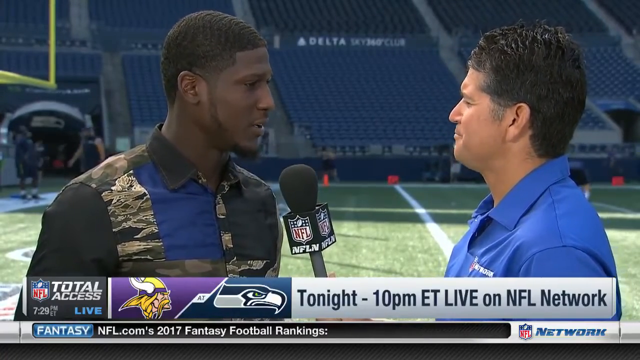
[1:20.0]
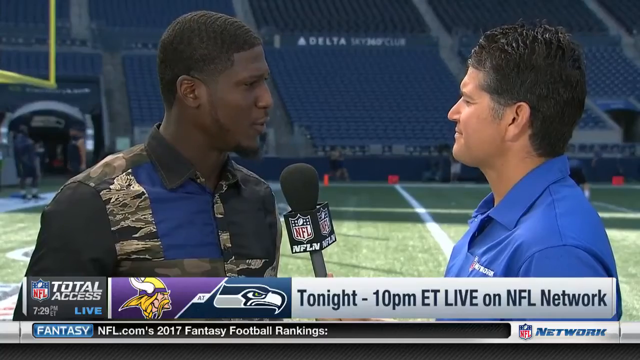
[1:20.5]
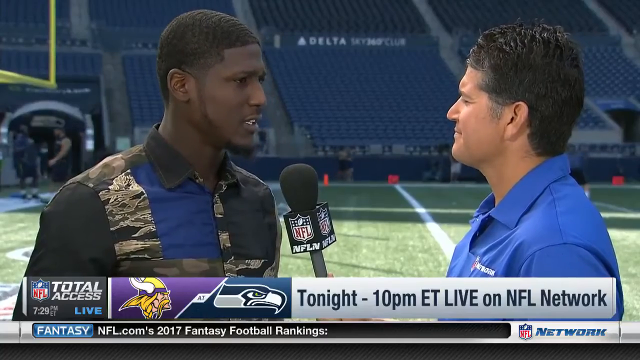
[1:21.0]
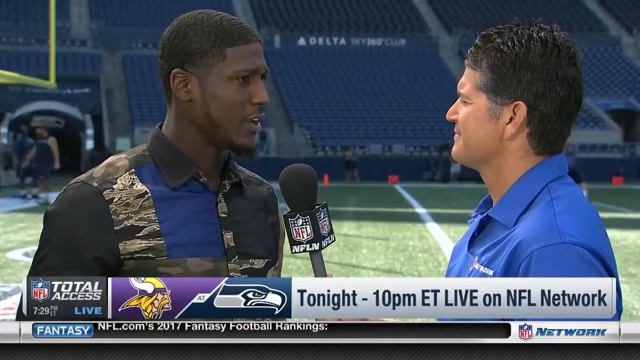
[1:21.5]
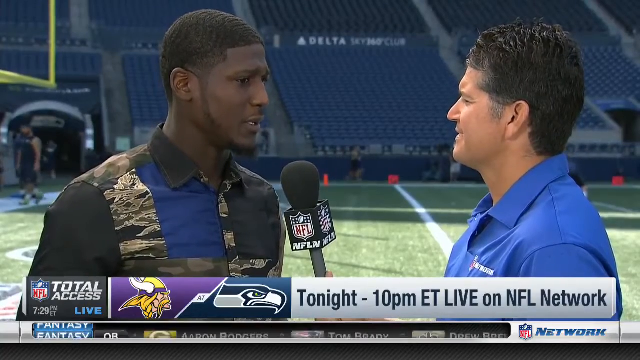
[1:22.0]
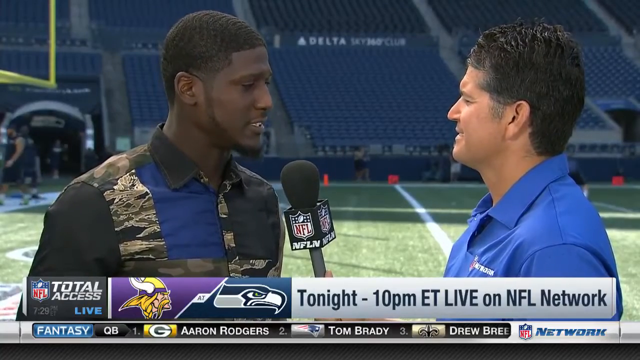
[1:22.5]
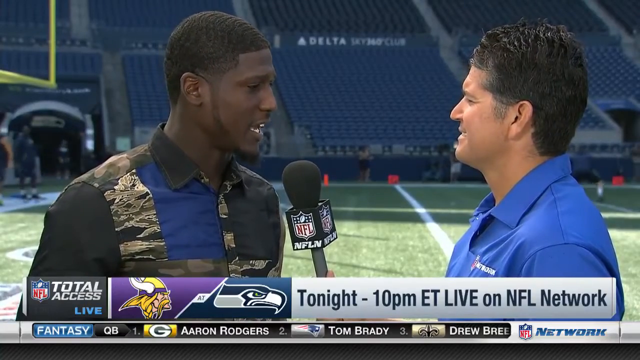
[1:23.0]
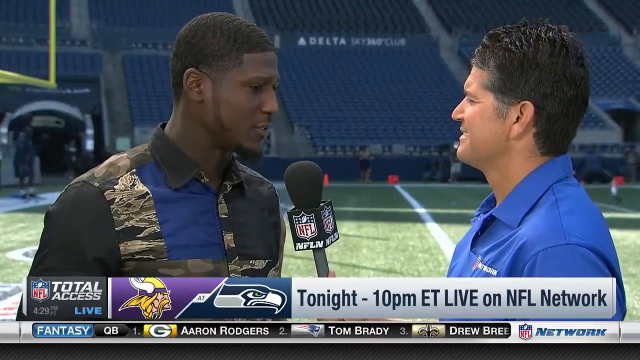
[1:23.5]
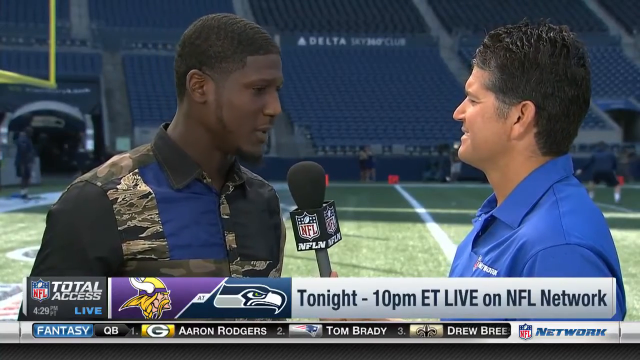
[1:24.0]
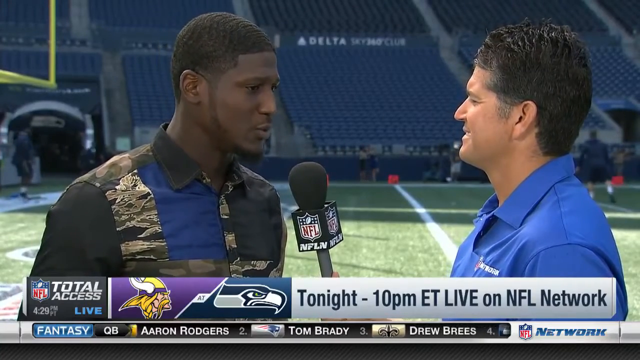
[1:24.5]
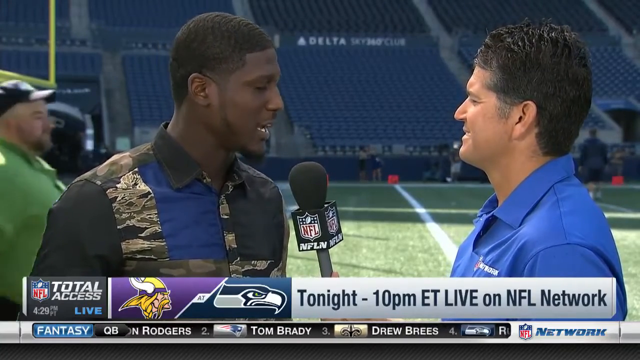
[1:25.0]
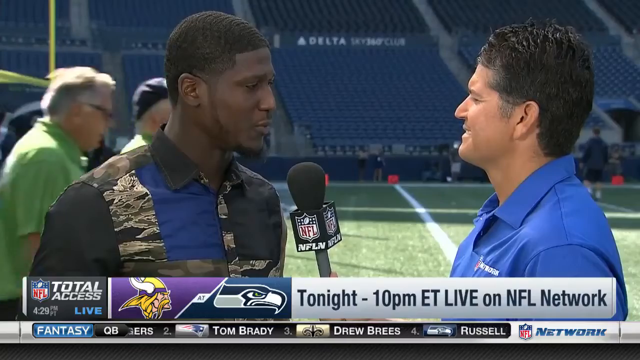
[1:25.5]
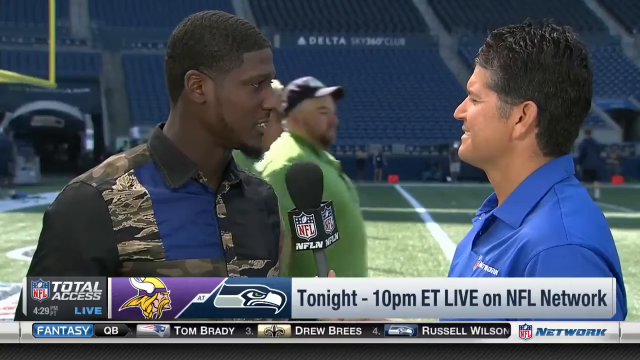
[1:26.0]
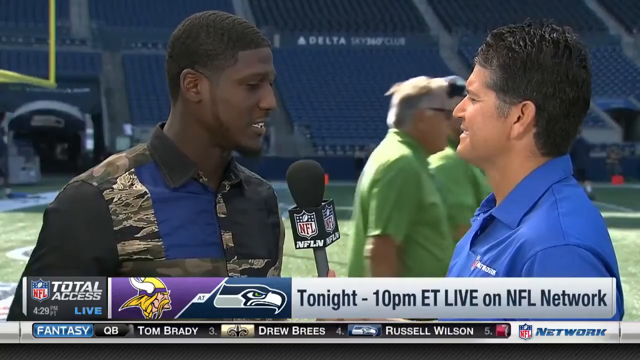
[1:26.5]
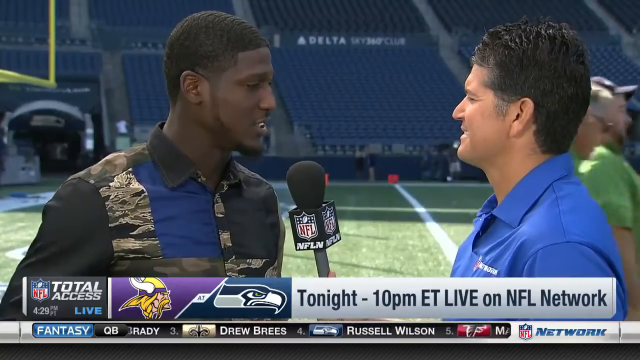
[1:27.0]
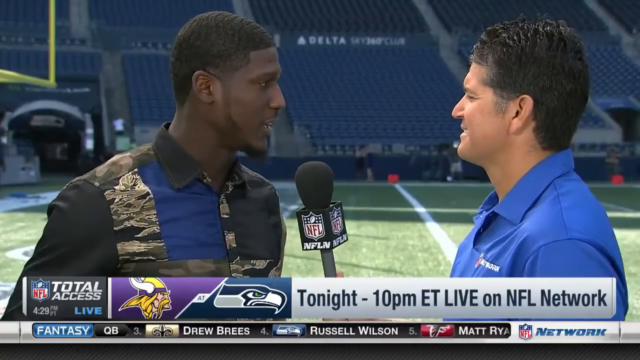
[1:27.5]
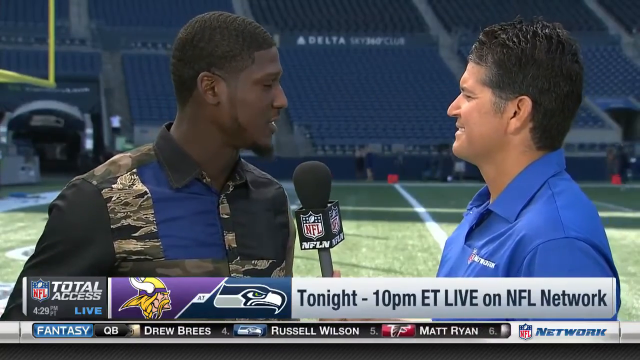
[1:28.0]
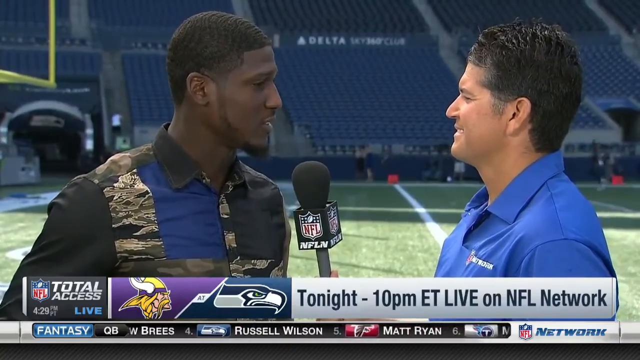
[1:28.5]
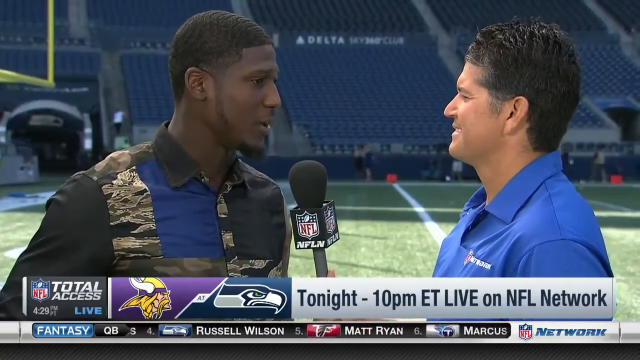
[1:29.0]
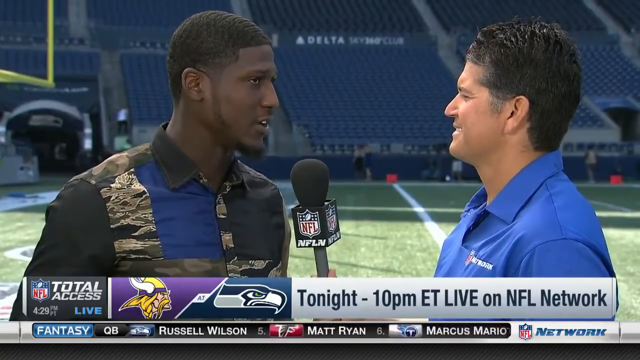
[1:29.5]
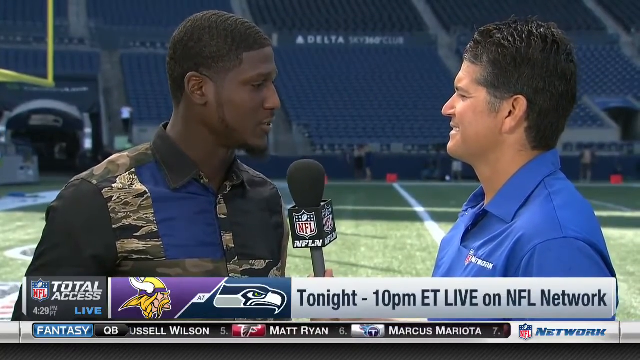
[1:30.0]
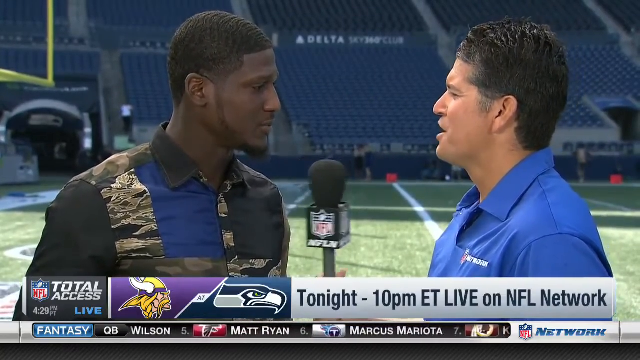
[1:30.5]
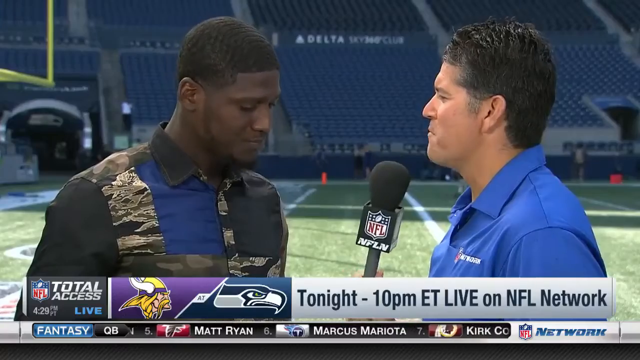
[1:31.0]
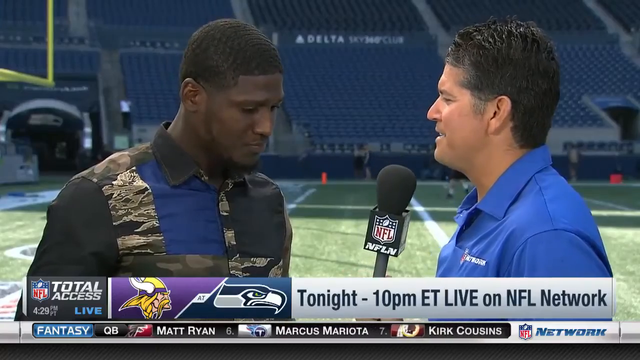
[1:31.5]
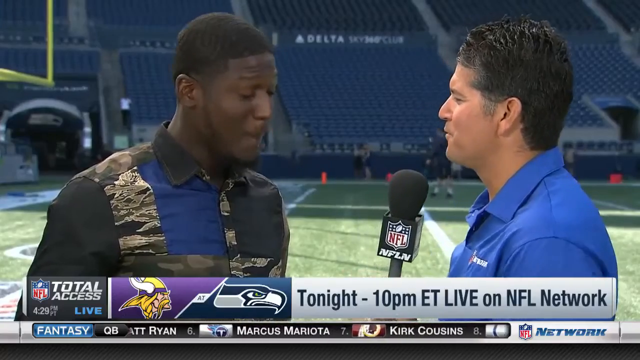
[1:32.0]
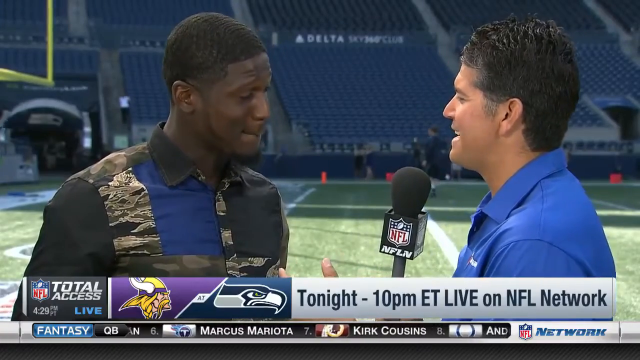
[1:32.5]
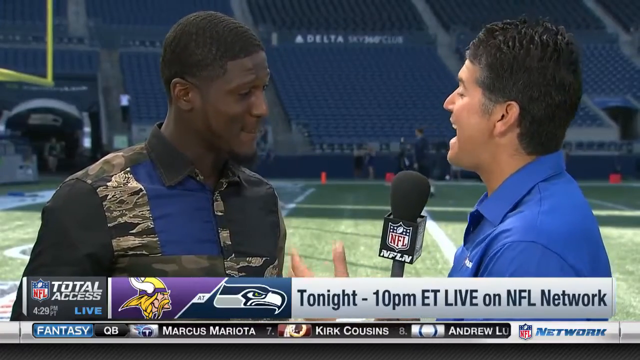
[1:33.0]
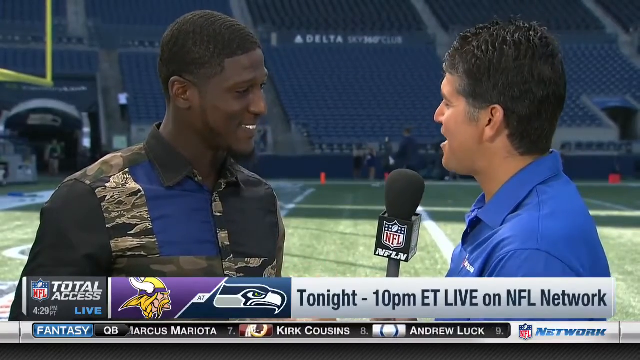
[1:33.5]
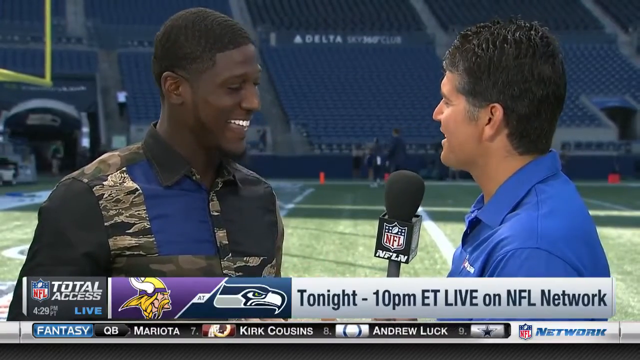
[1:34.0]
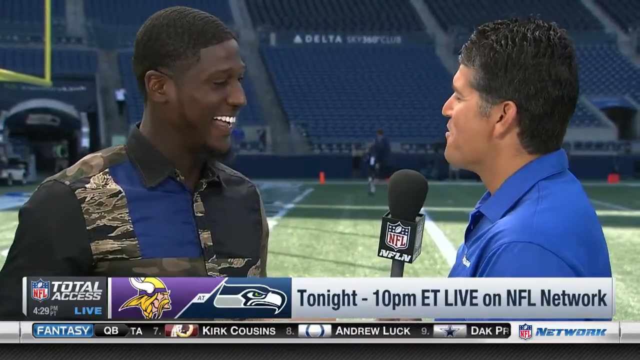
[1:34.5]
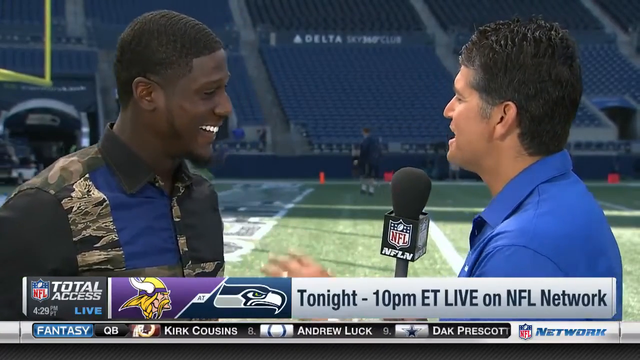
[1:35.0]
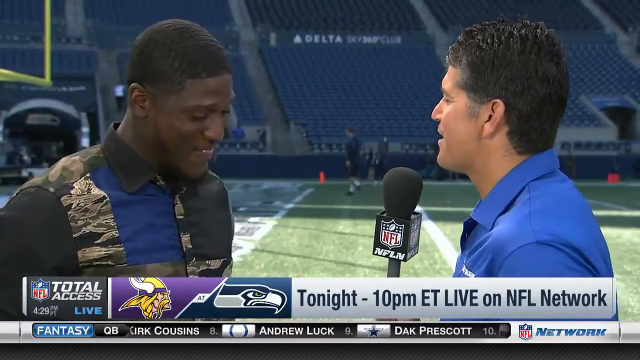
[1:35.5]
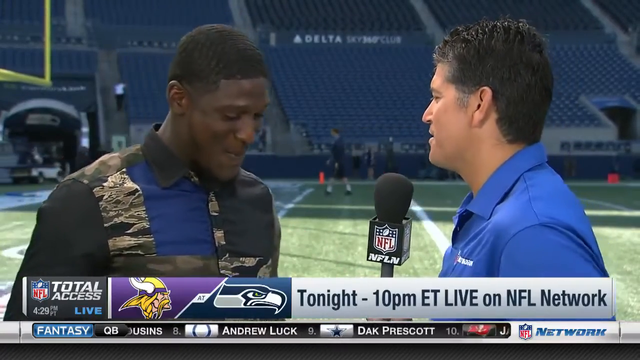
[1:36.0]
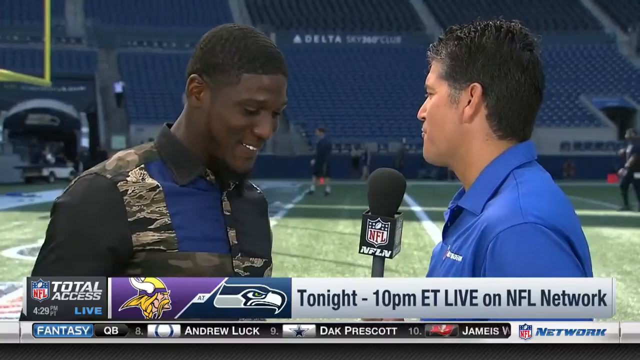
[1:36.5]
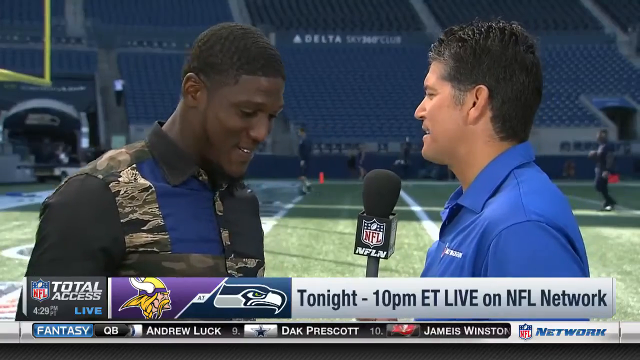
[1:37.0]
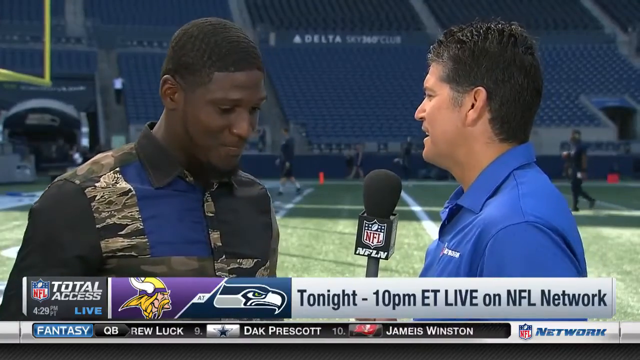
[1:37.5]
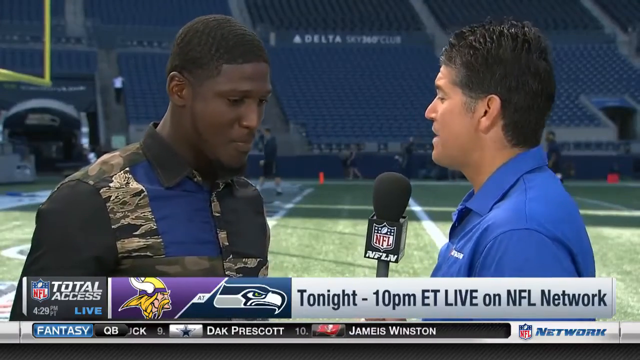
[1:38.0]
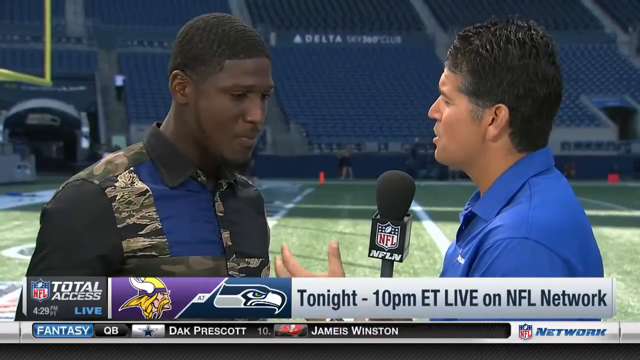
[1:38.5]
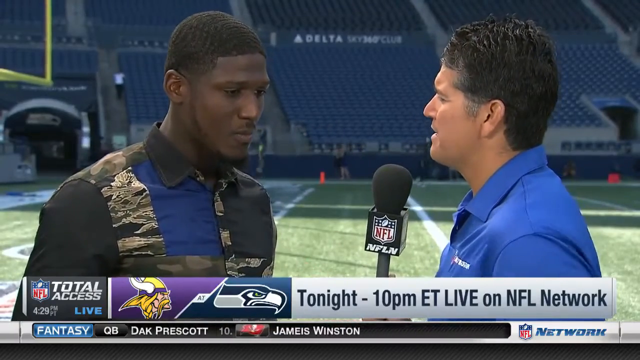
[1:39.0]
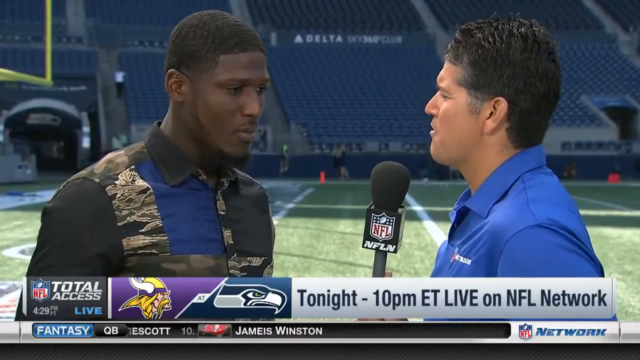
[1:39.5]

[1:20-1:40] Two men face each other. One, in a blue polo shirt, holds a microphone and interviews a gentleman standing opposite him, a Black man wearing a very smart shirt that is a kind of patchwork of different military outfit colours. The microphone has a square NFL box-like logo around the base of the foam. The interviewer points the microphone to the Black man's mouth as he talks, staying fairly still with slight movement in his head and shoulder. Two large men in lime green t-shirts walk past in the background from left to right. The interviewer looks into the other man's eyes with a smile on his face, then pulls the microphone back under his own mouth and starts speaking into it. His left hand comes up, showing a wedding ring, and he uses his right hand to emphasise some points.